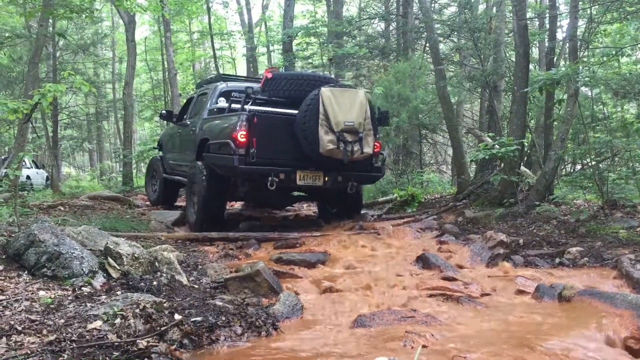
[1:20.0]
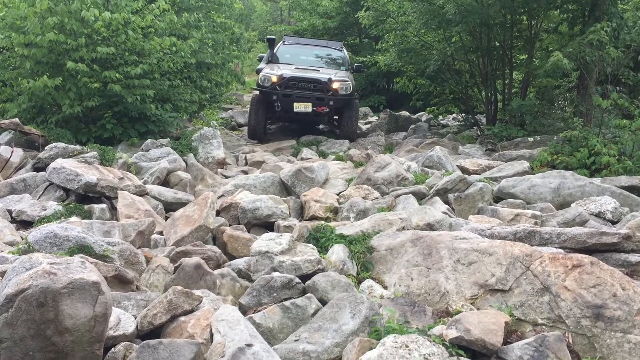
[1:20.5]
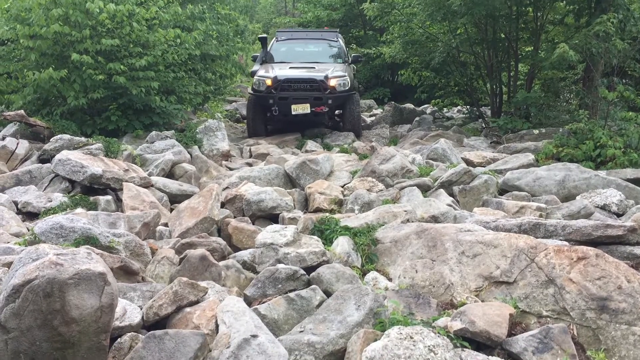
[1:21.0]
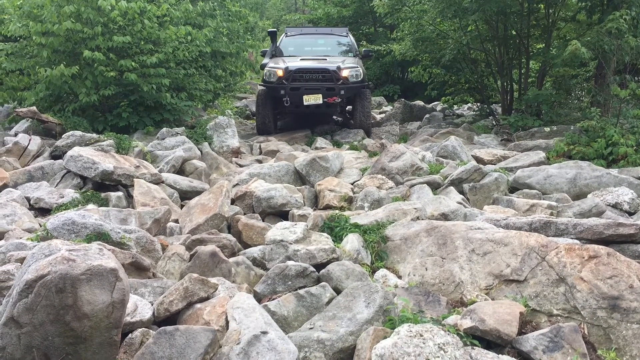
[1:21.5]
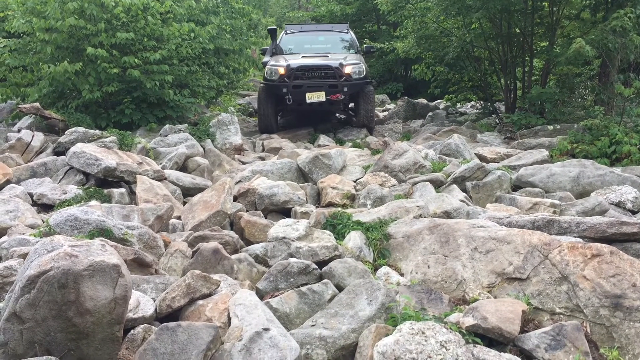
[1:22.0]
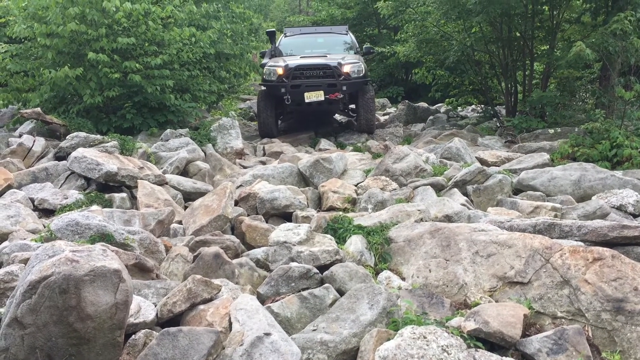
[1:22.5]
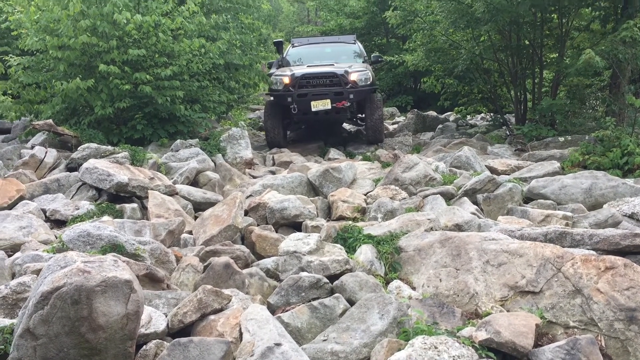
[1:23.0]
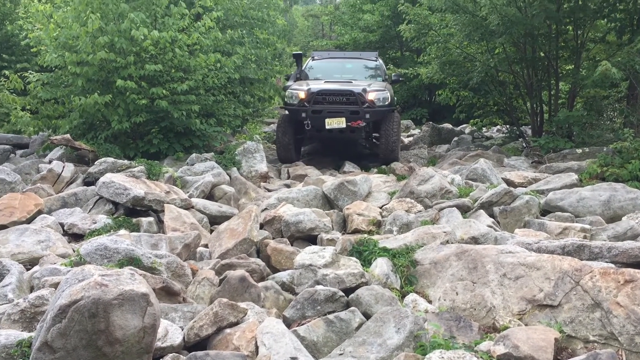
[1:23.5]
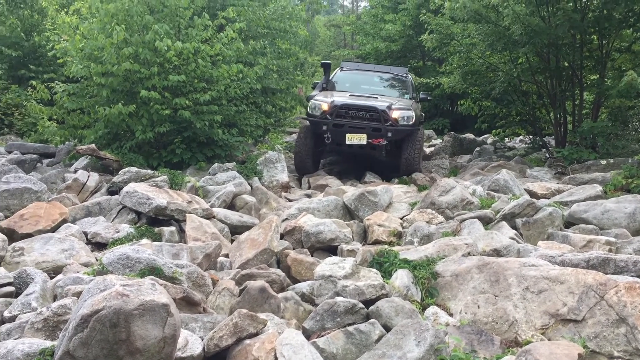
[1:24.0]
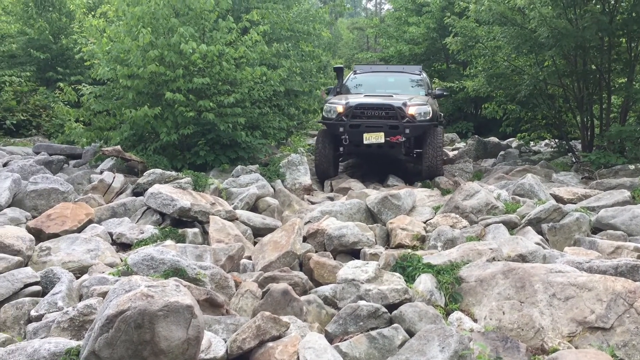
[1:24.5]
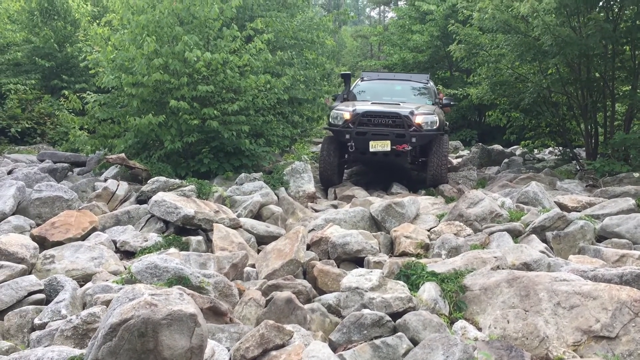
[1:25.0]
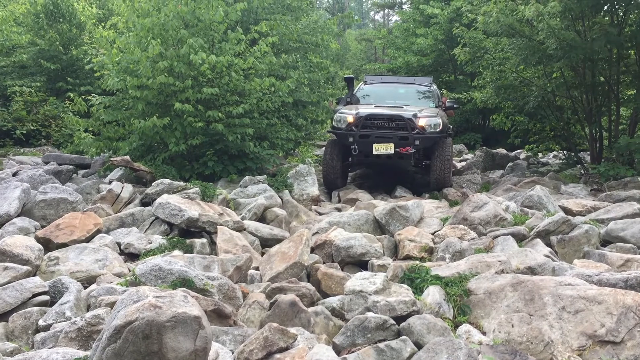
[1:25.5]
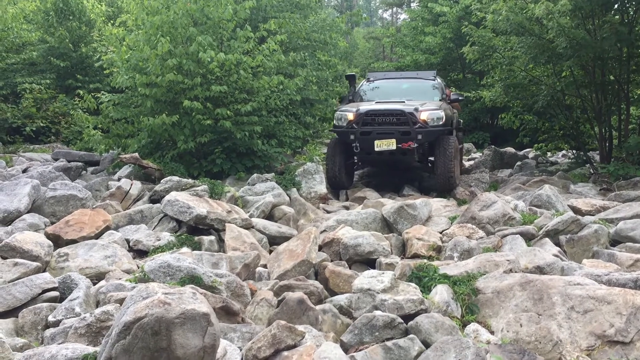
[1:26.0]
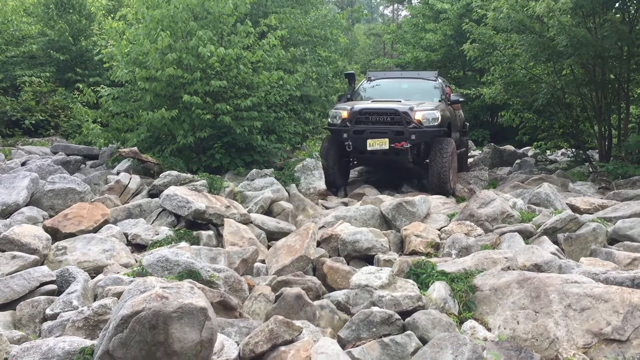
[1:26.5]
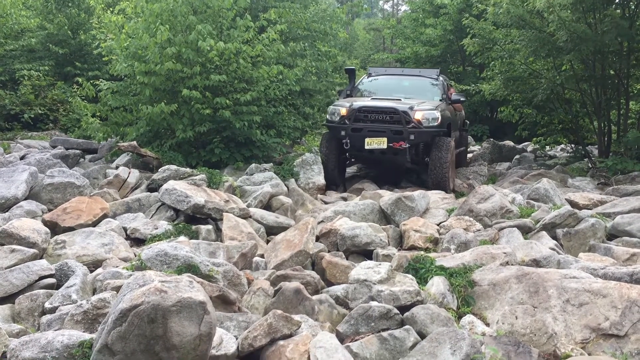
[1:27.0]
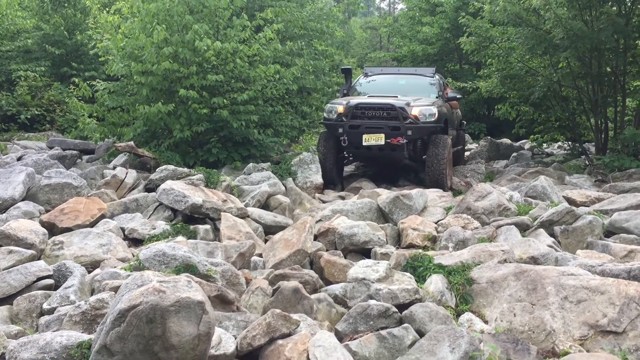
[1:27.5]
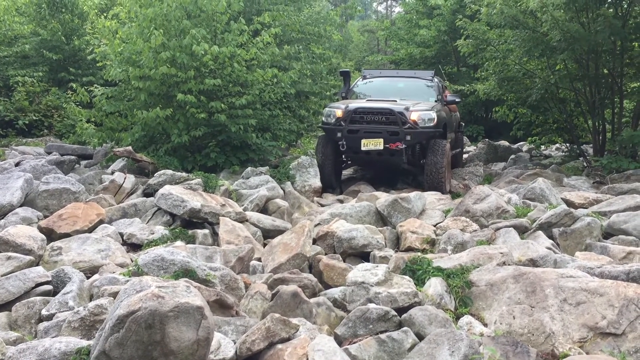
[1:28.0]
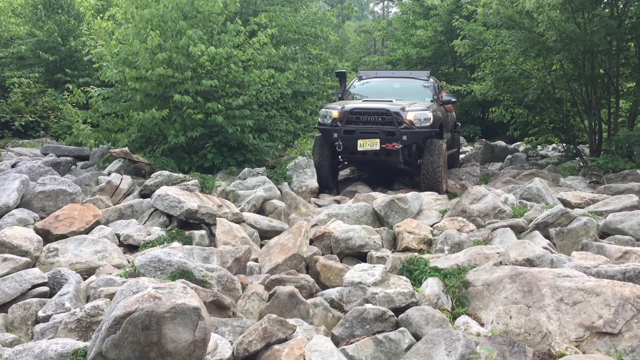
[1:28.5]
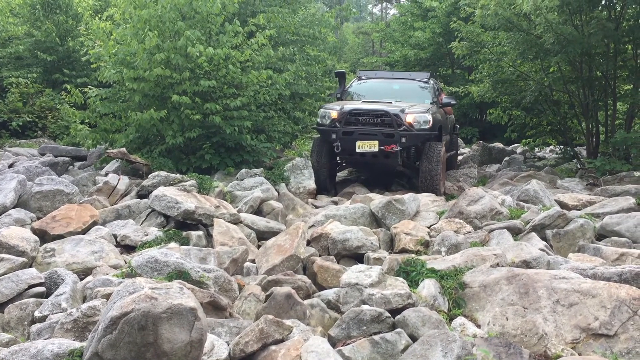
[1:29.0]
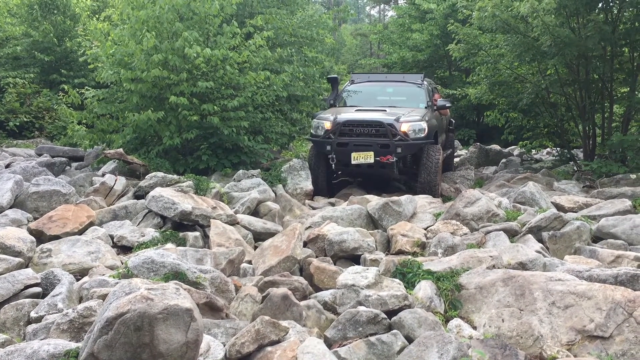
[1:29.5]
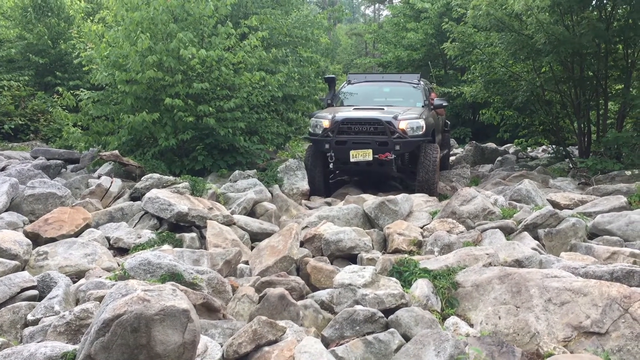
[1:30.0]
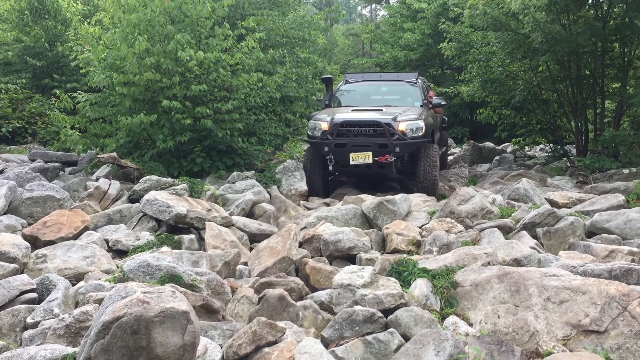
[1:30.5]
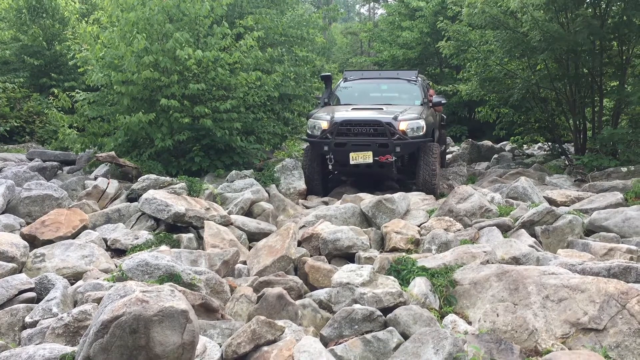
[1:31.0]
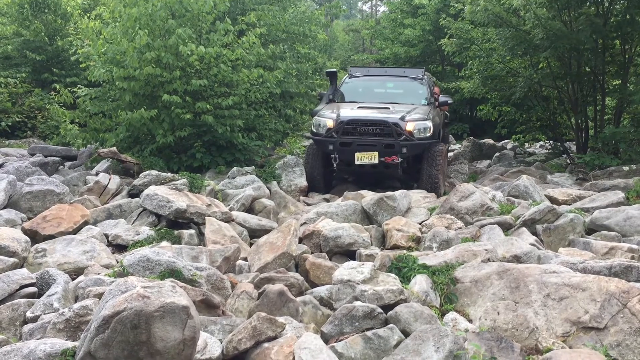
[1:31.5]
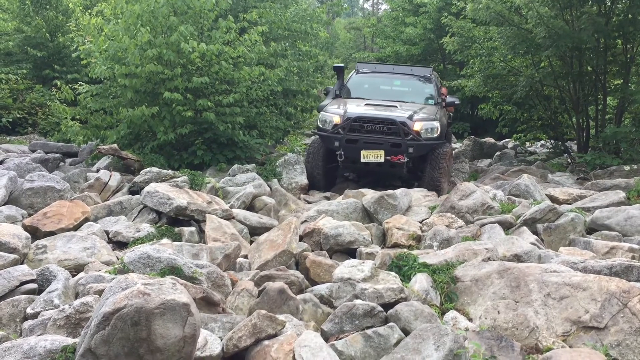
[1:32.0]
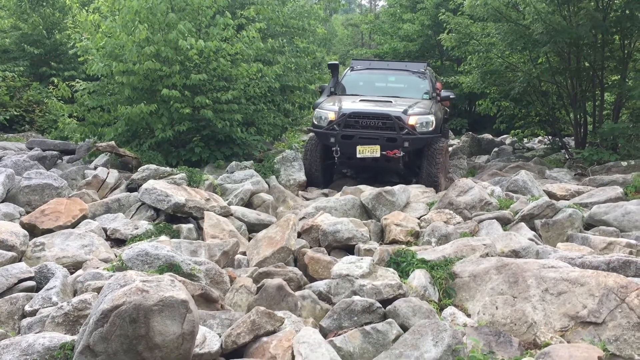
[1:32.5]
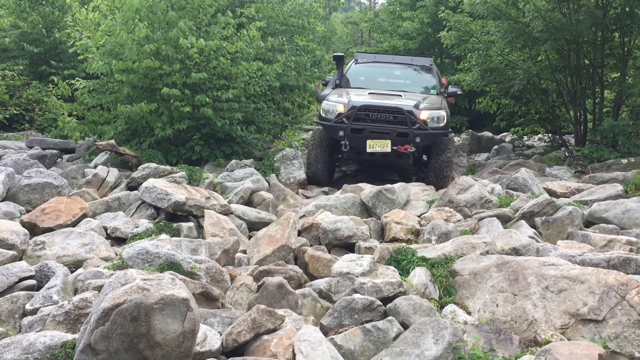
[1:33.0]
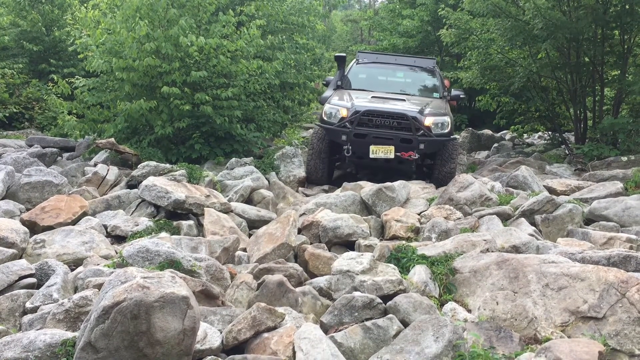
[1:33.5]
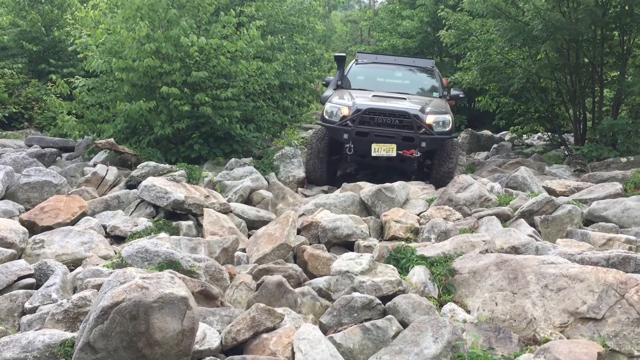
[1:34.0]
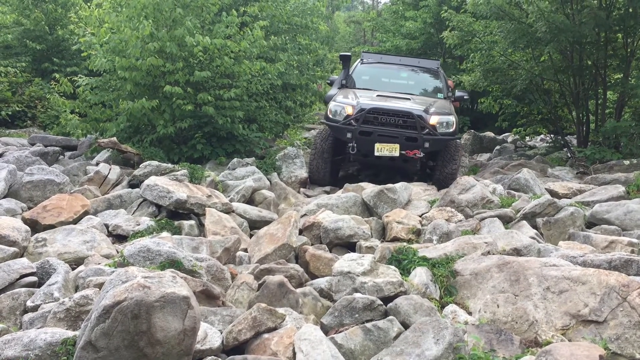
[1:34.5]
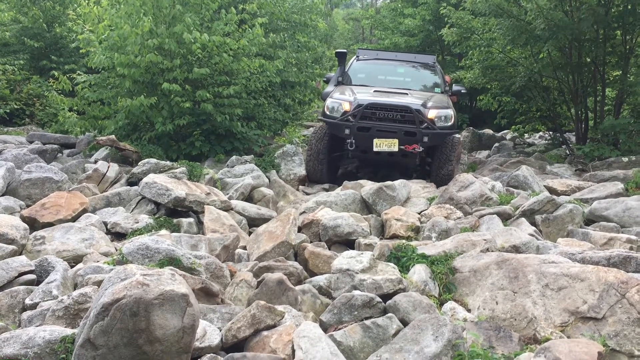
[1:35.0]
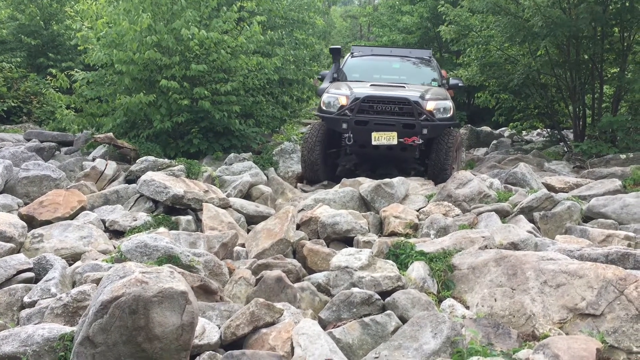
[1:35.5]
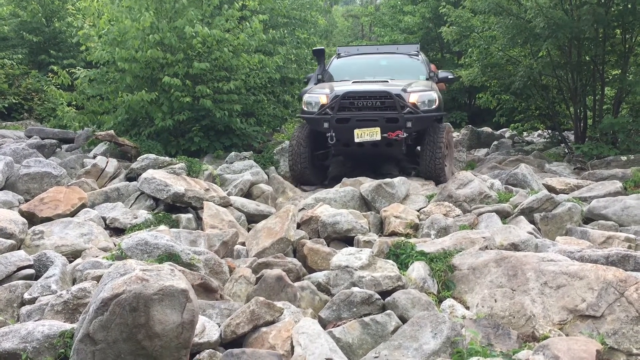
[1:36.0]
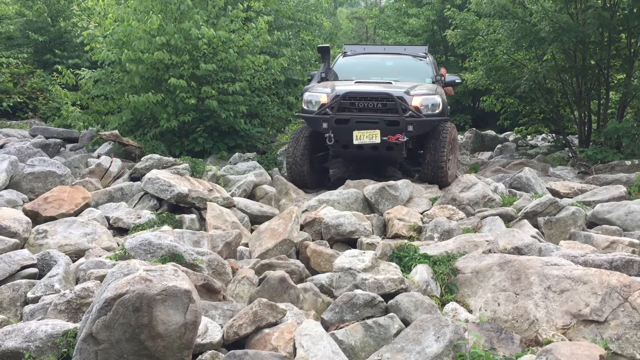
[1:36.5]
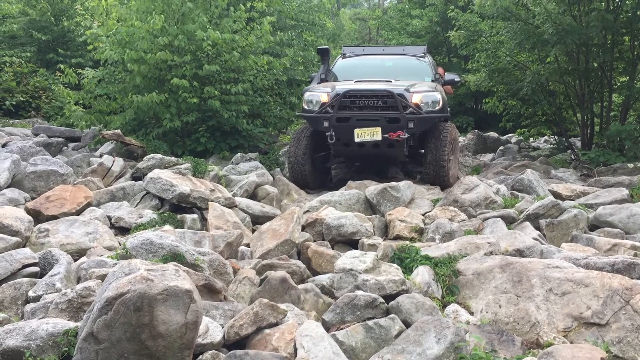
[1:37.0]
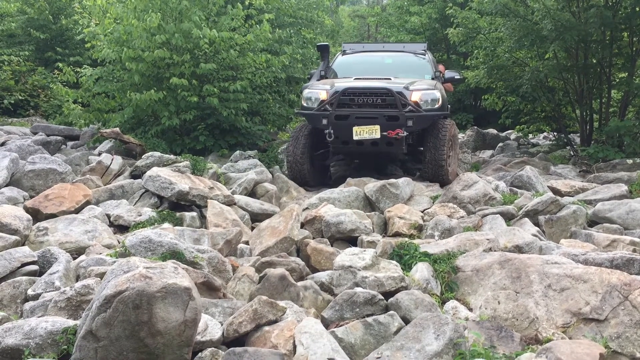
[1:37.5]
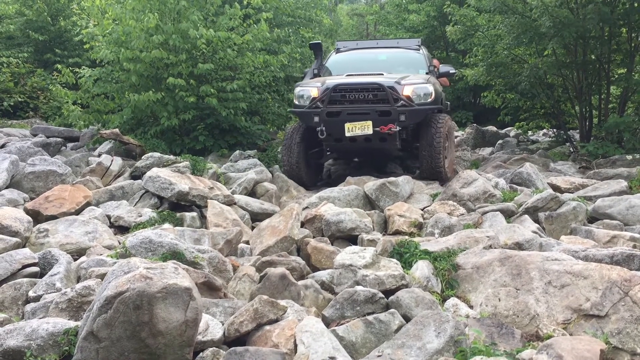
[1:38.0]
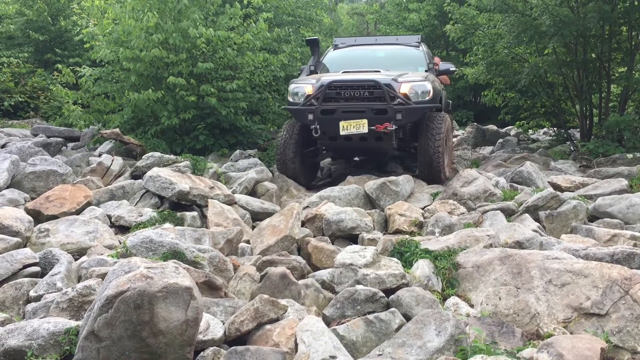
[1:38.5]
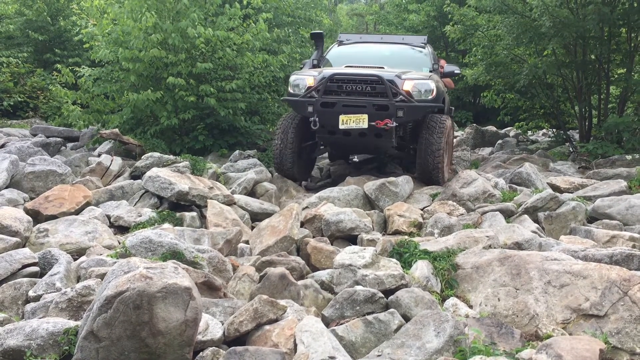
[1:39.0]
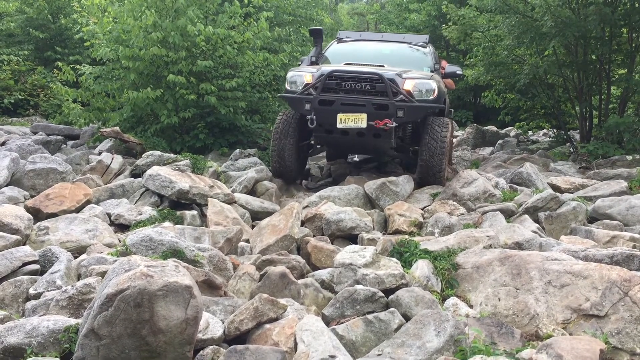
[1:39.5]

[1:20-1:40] The cameraman is still behind the truck. The water runs sideways across the frame, going up and to the left into the image, about midway up. There are heavy rocks to the left of it and rocks all in the water, which is really dirty. On the left side, about midway up, a white truck is parked off to the side in the distance. A little of the main truck's driver's side and its back end are visible; it also has a yellow license plate on the back. As he drives forward, the video cuts to a front view with a lot of big boulders, probably four feet by four feet, some a little smaller, and heavy greenery behind. The truck is a little in the distance and comes toward the camera, showing its front end, with rocks stretching all the way across and bigger rocks toward the bottom. He drives very slowly as the truck goes up; sometimes the driver's side wheel comes down first, sometimes the left side, because the rocks are so jagged and off kilter. He pushes the gas a little, and the wheel spins on the rocks. Then the truck dips down, with the back end a little higher. His head looks out as he tries to find the best direction over the rocks, steering ever so slightly left and right to get better grip.